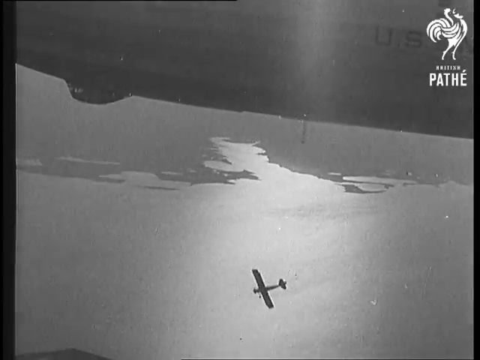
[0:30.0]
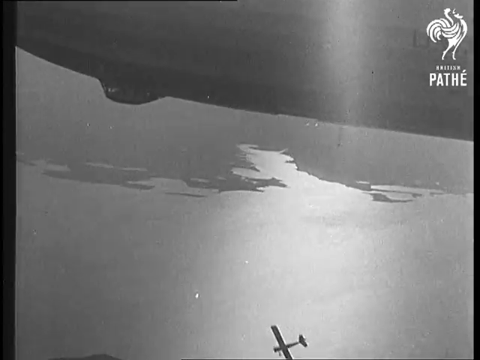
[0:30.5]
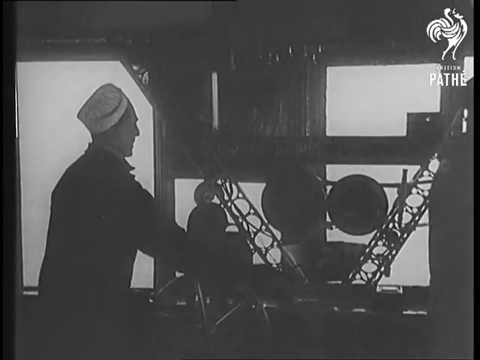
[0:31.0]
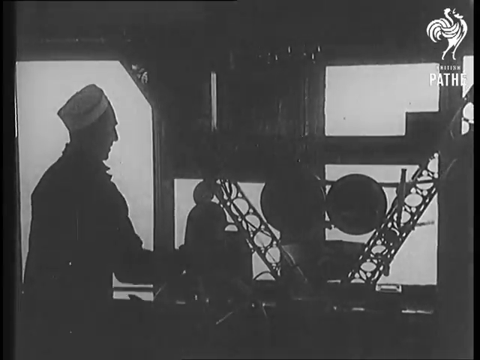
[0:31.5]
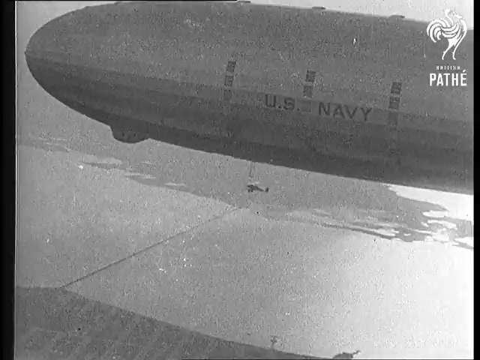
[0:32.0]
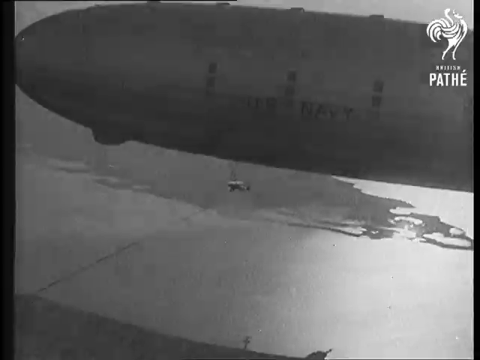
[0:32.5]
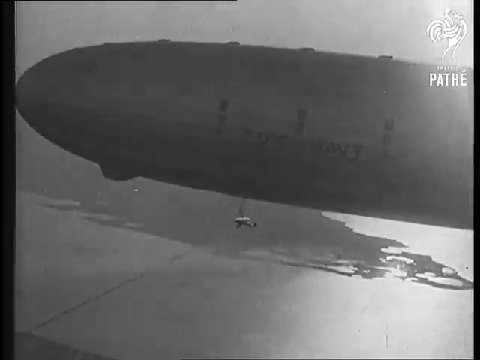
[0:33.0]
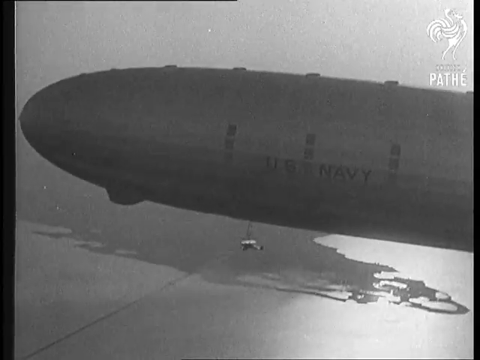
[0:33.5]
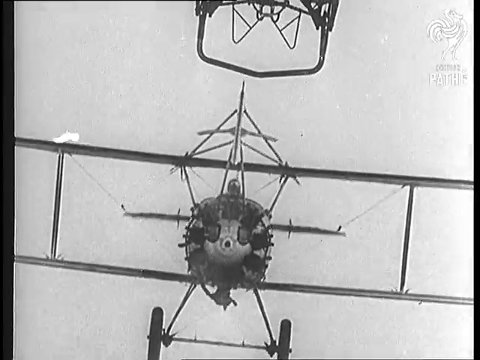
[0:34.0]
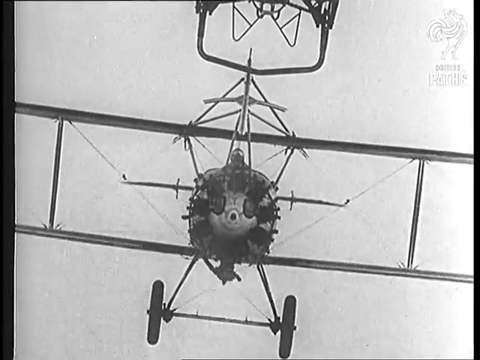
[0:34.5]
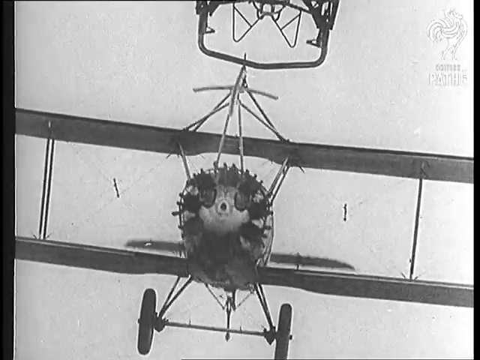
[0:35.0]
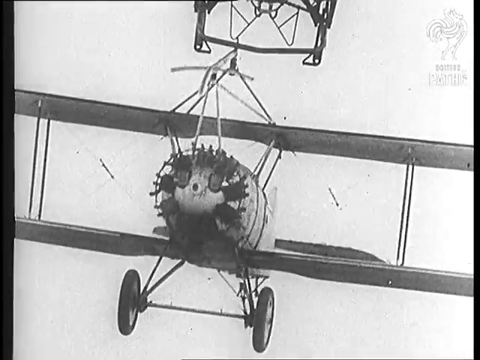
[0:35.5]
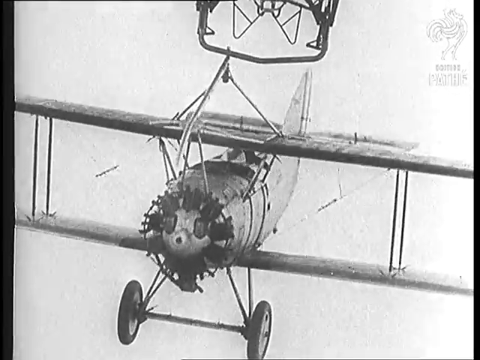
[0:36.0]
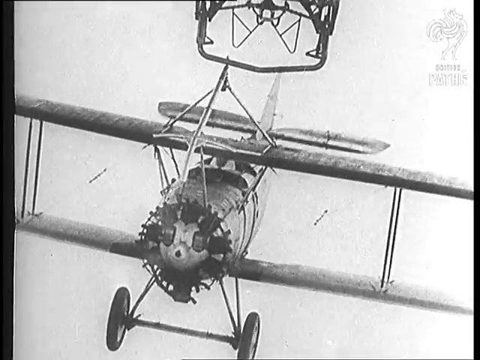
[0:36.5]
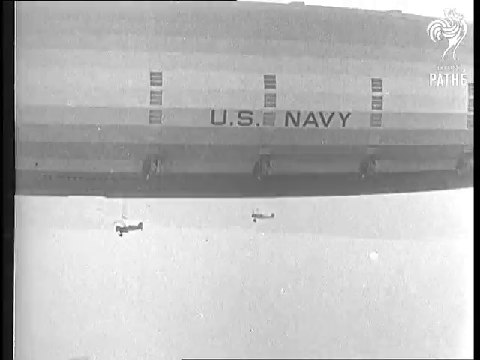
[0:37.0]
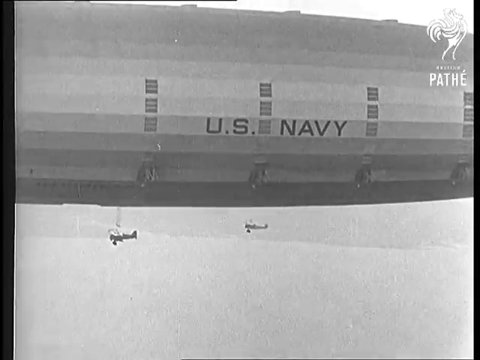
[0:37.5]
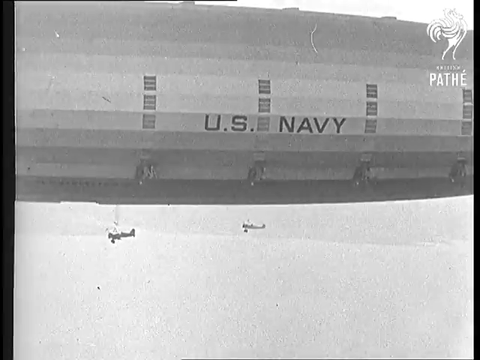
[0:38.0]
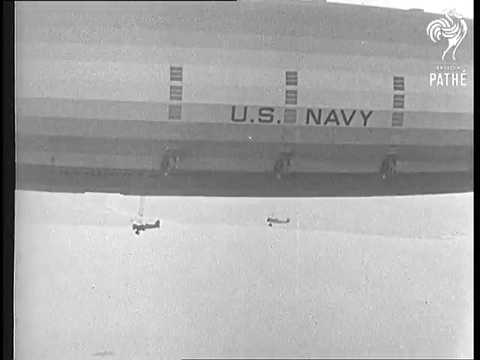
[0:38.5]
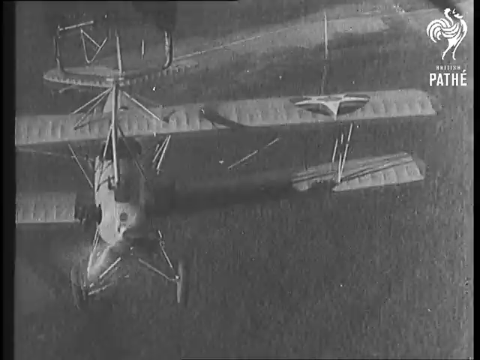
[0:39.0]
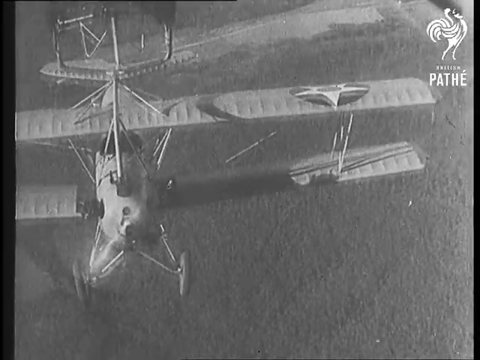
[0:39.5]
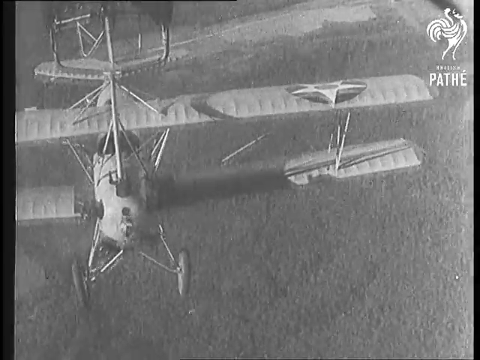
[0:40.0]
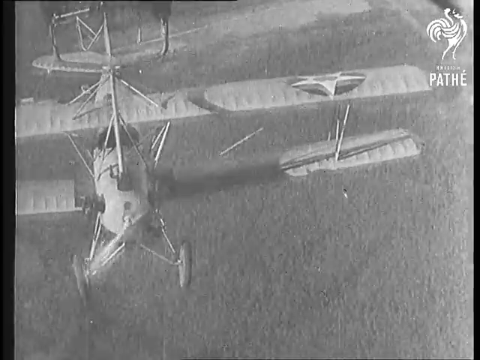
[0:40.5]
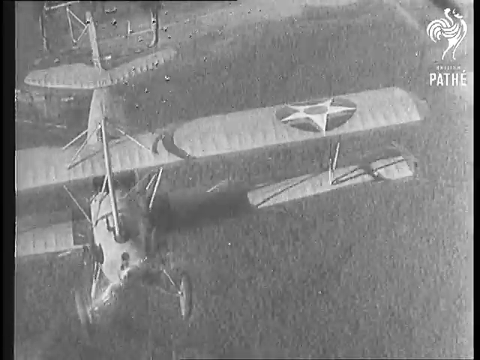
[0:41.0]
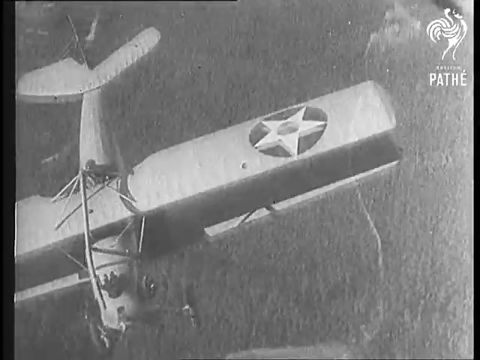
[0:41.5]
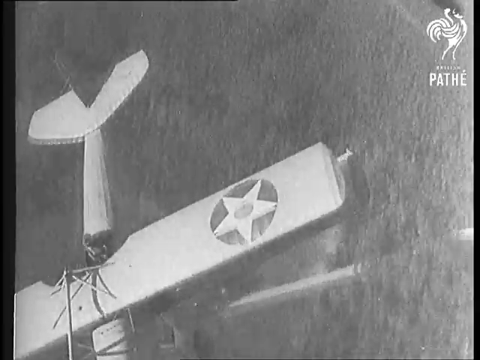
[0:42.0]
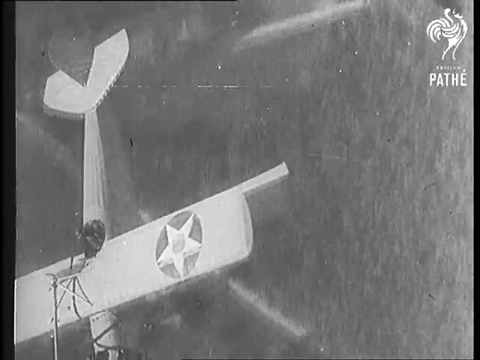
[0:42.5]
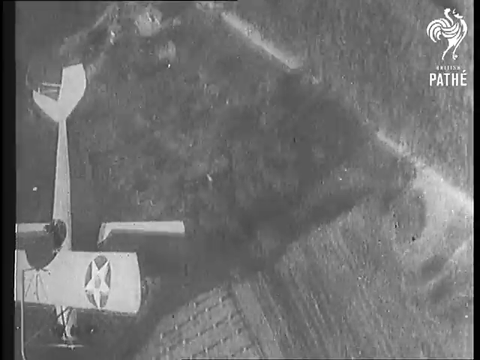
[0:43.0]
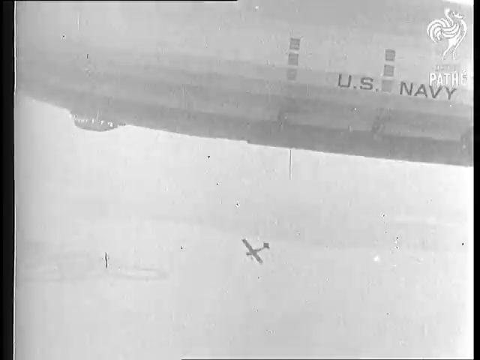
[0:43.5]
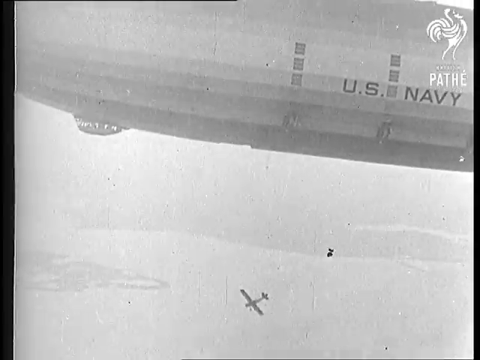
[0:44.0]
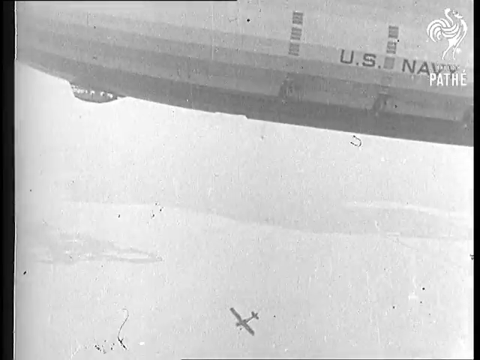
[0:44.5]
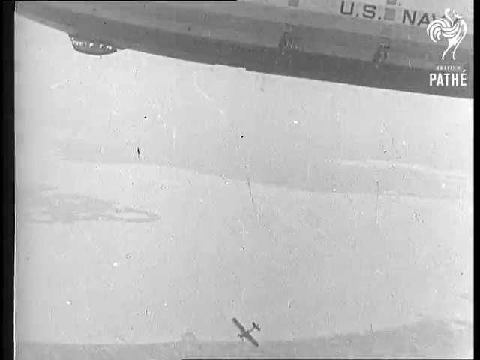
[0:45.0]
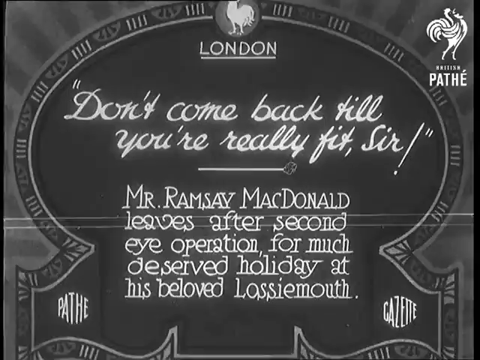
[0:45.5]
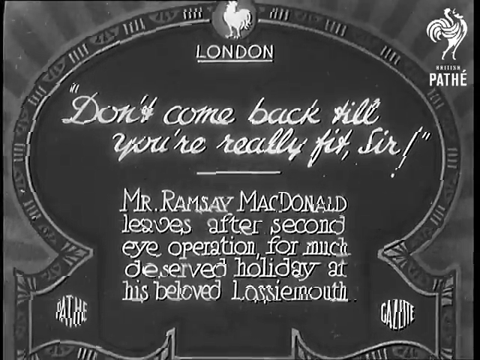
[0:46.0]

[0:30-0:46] The plane is still flying, with the camera probably on the blimp, and open water is visible below. There appears to be a shot of possibly a man inside the blimp steering it, followed by a close-up of the plane, whose pilot is exposed to the elements. "U.S. Navy" is written on the side of the blimp. The plane looks like it could be a fighter plane. The planes appear to be hanging underneath the blimp as it flies; the person earlier thought to be in a watchtower seems to be the person flying the blimp. A plane attached to the blimp is released once its engine is running, dives down a little to get away from the blimp, and then flies on its own. The footage is black and white.